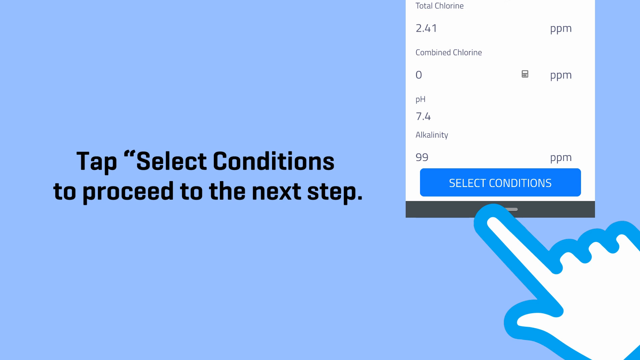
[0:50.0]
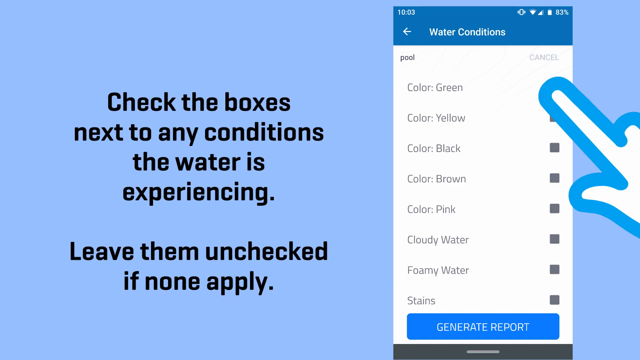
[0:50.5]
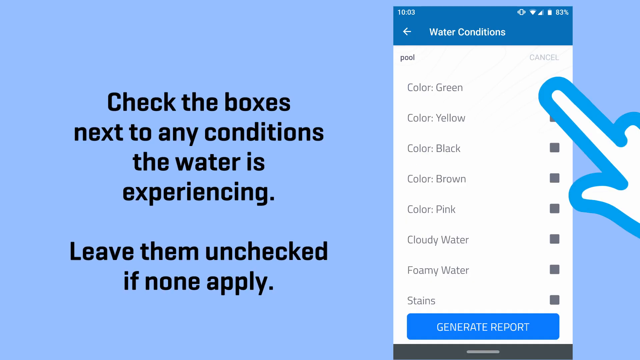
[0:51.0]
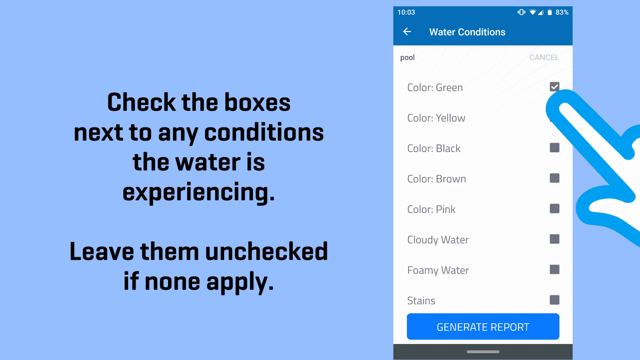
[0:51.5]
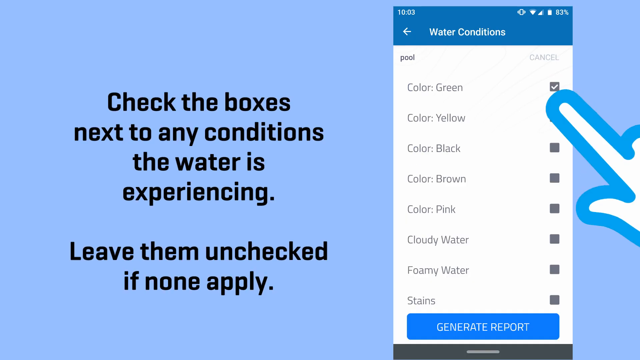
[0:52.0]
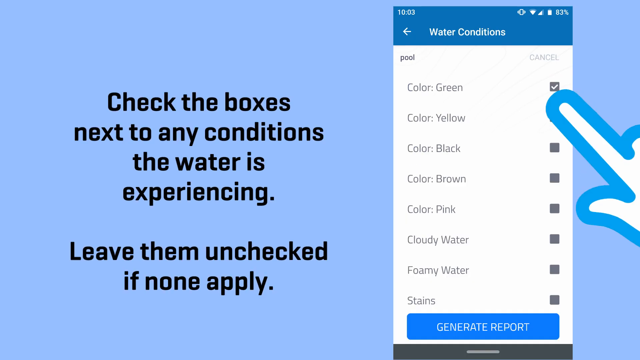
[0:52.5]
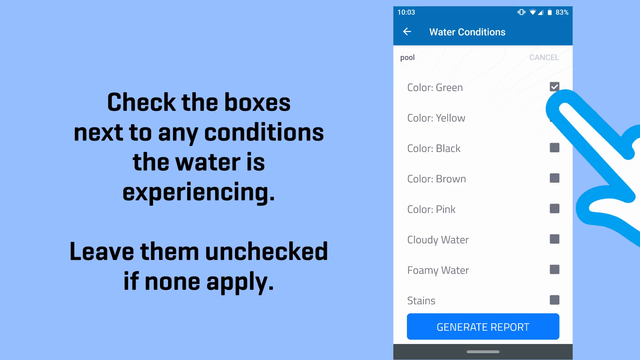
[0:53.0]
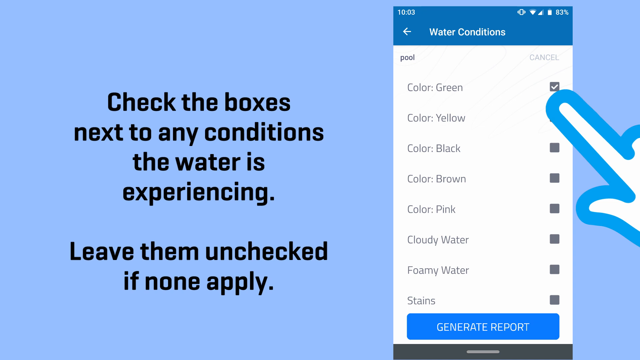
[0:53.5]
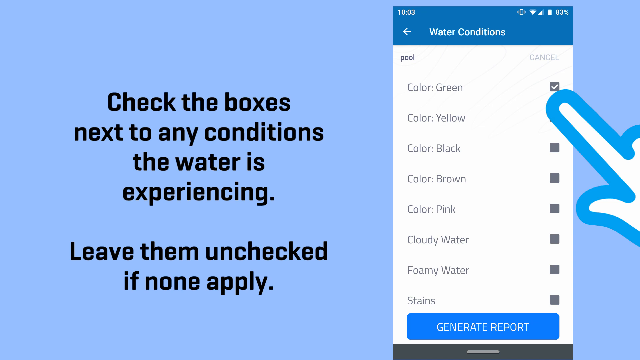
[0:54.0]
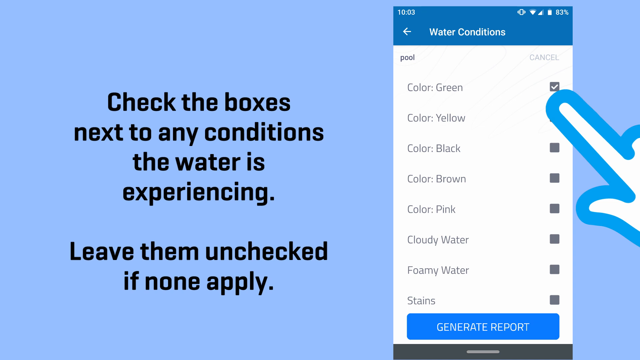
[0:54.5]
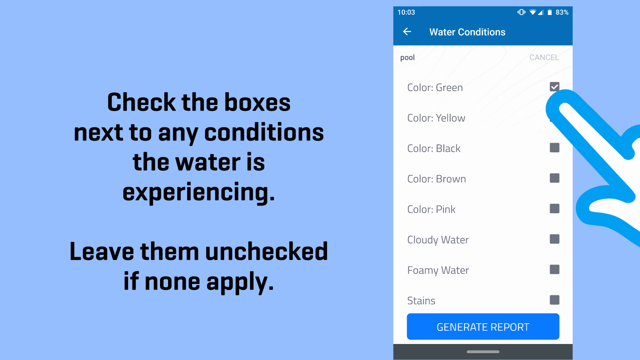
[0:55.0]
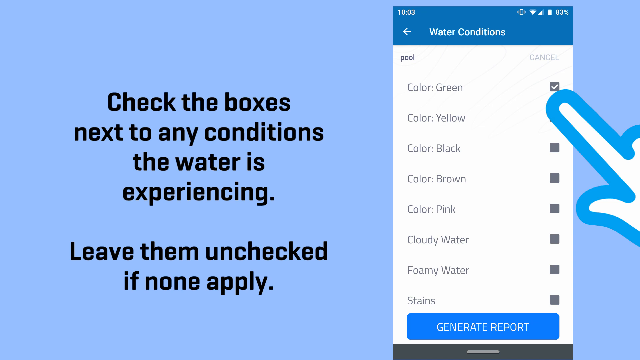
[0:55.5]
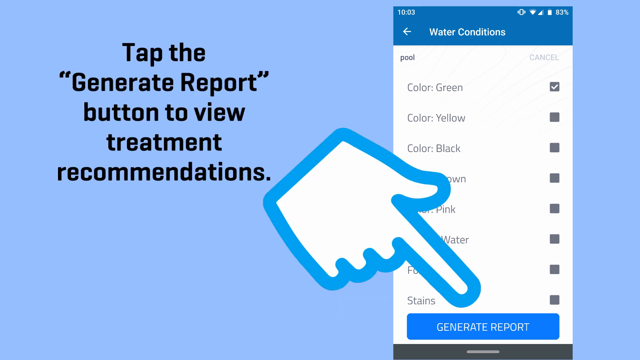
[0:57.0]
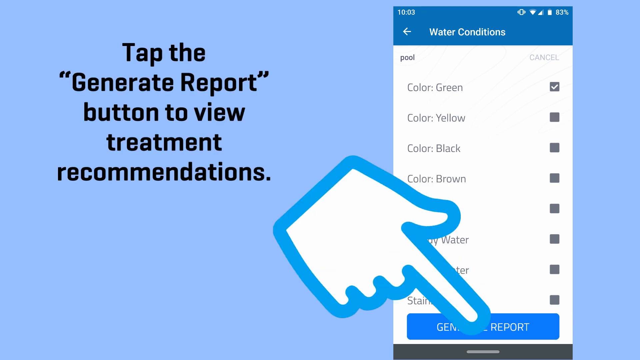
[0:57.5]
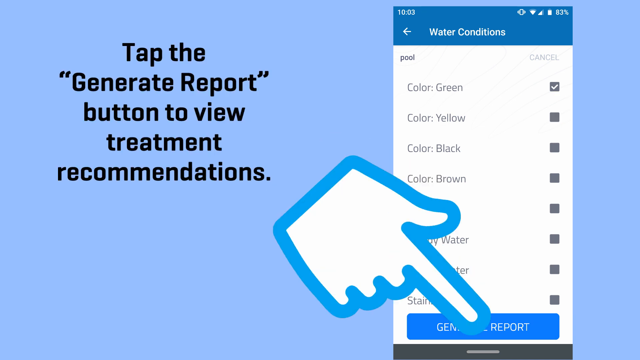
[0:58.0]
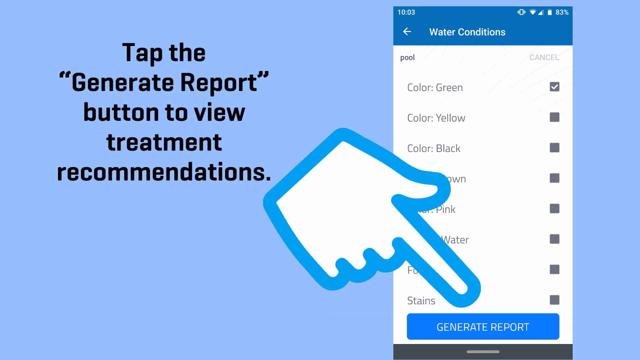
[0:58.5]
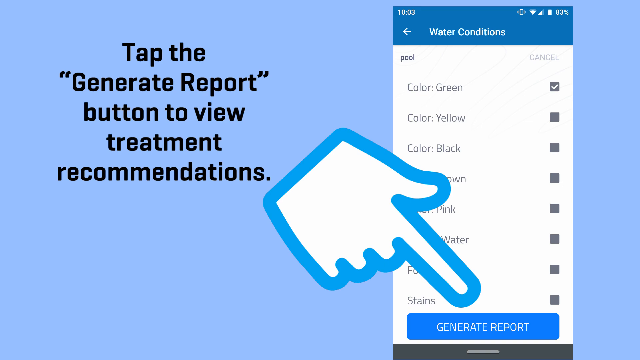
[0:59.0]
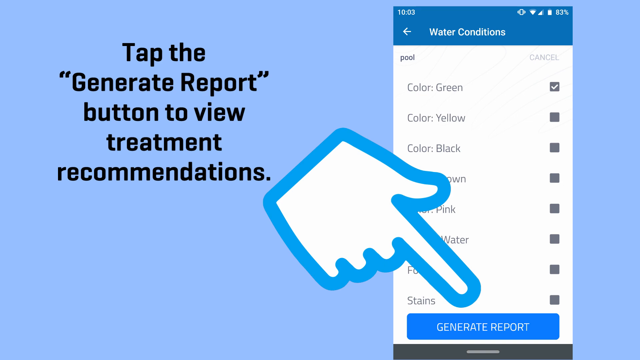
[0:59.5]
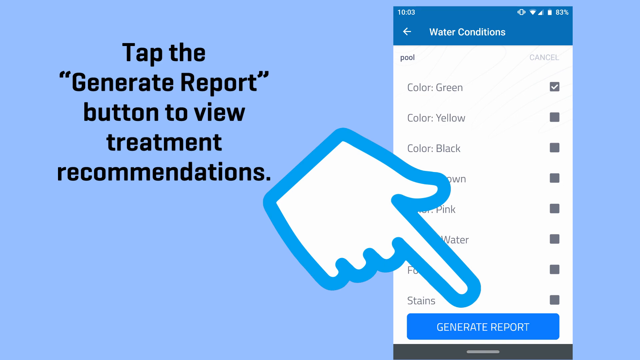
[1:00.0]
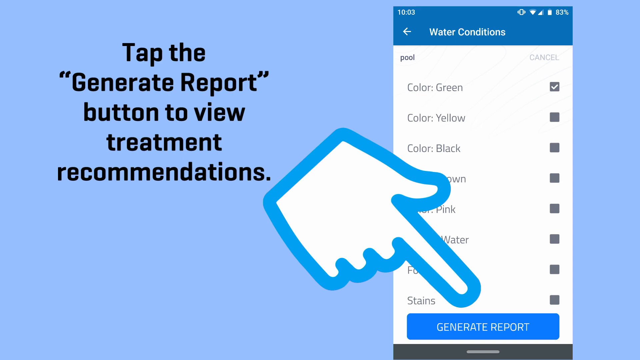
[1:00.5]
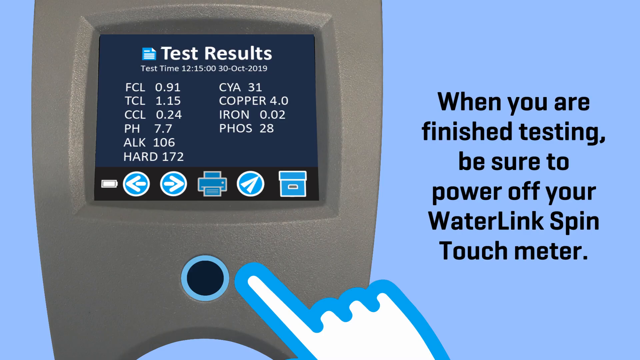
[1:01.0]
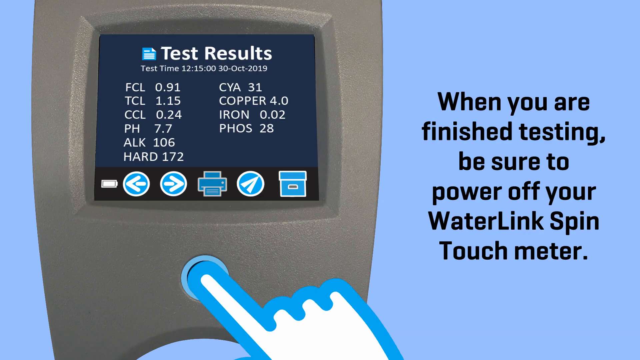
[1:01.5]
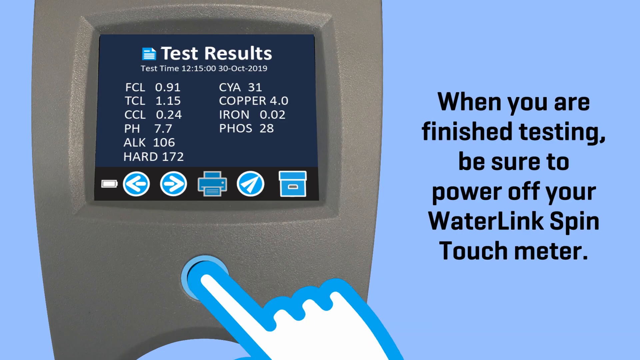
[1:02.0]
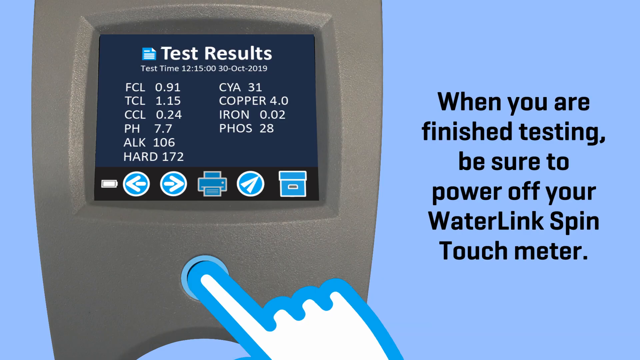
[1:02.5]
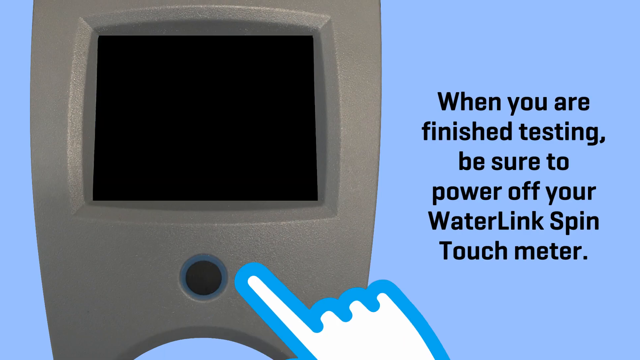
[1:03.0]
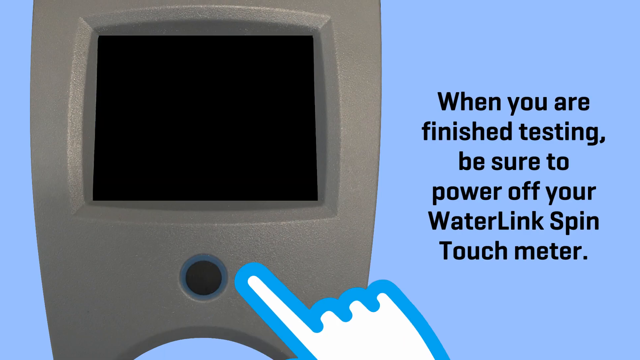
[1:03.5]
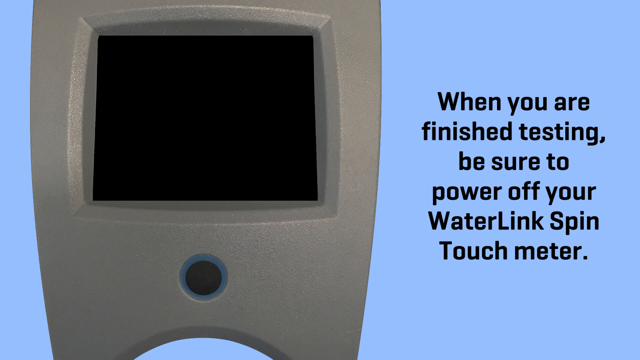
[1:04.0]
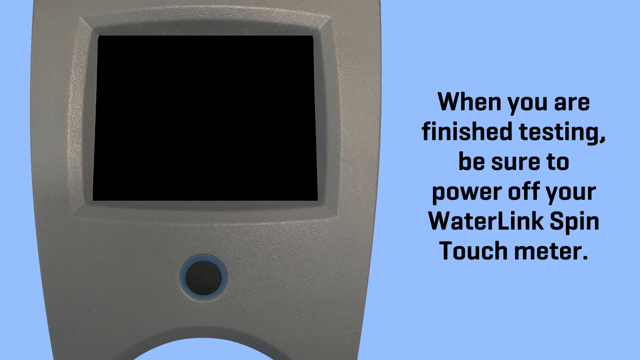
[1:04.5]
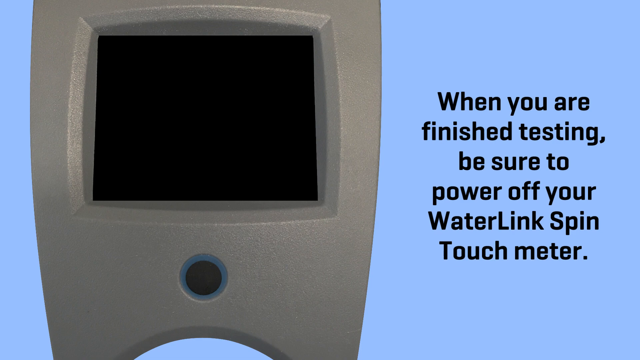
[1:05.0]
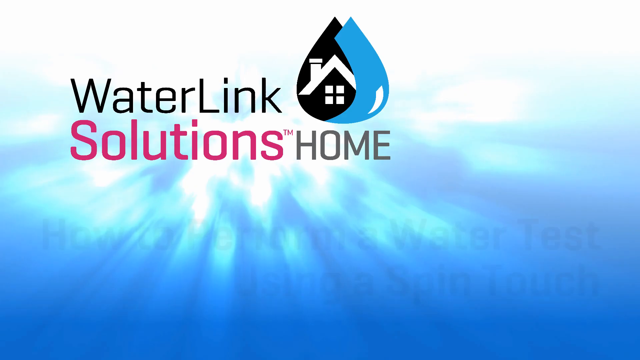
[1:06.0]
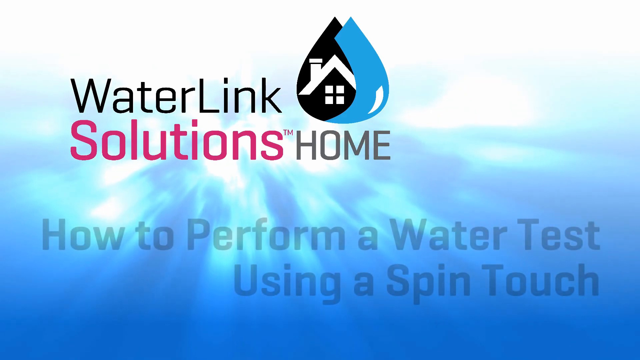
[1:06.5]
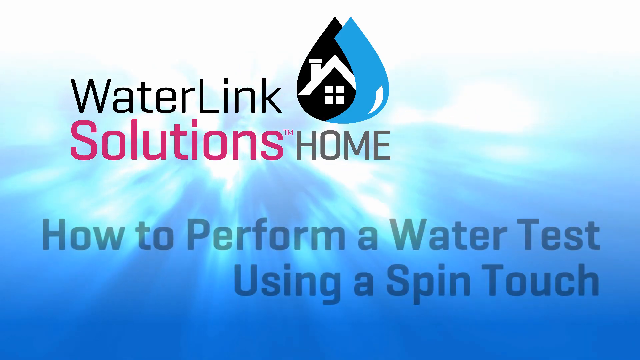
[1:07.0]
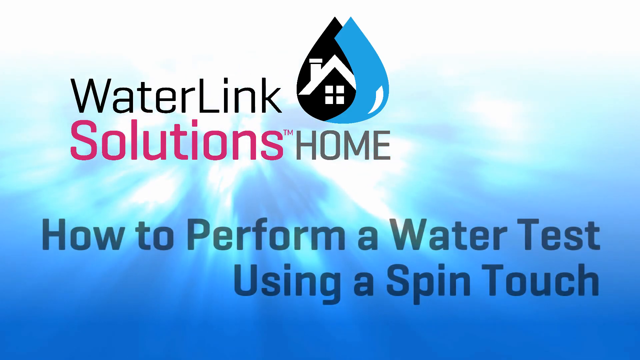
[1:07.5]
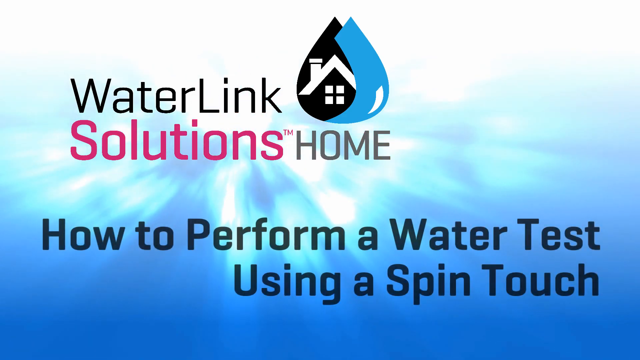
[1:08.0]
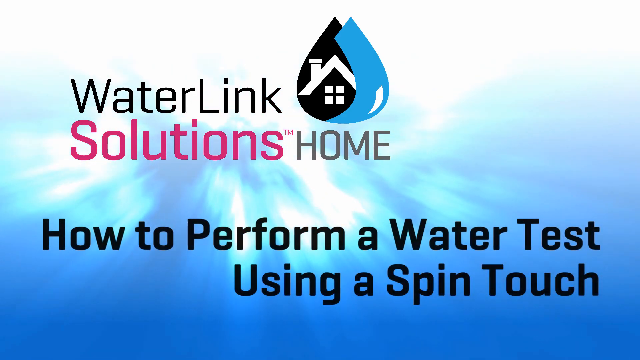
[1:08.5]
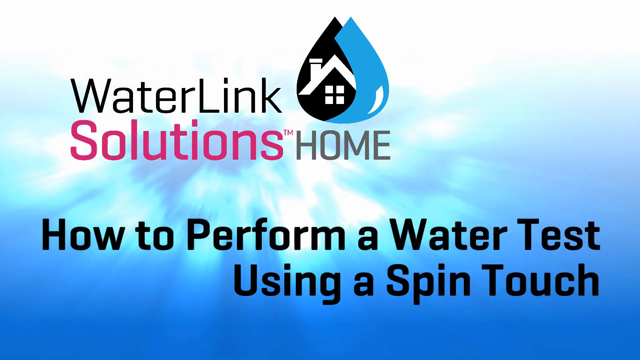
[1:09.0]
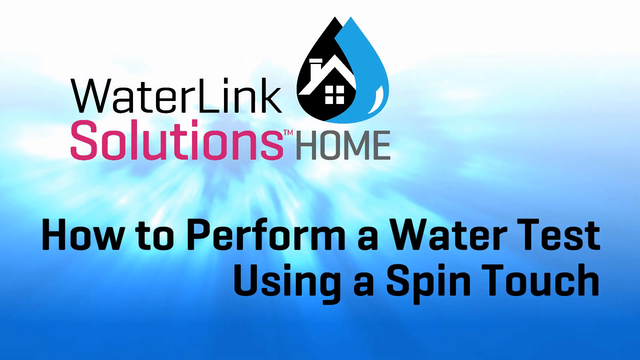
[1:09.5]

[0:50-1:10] Black text on a blue background reads "check the boxes next to any conditions the water is experiencing. Leave them unchecked if none apply." A blue hand shows exactly where to click on the app. The next part reads "tap the generate report button to view treatment recommendations", and a blue hand points toward where to tap on the app. The next screen reads "when you're finished testing be sure to power off your water link spin touch meter". A blue hand is then shown pressing the meter's button to power it off, and the meter turns off in the picture. An ocean scene then appears, blue and white and moving, and it reads "water link solutions home", with "solutions" in red; at the bottom it says "how to perform a water test using a spin touch". At the top is a blue droplet with a house in the middle. The blue and white water has a lot of movement and looks alive.